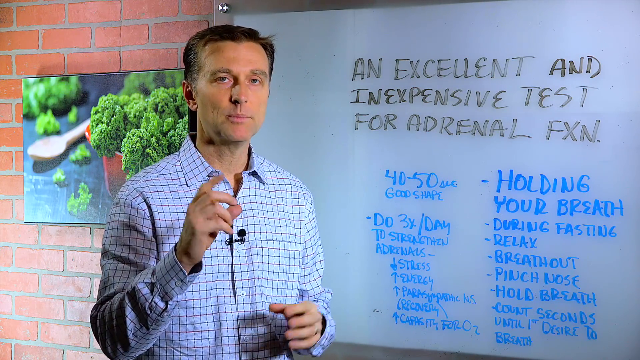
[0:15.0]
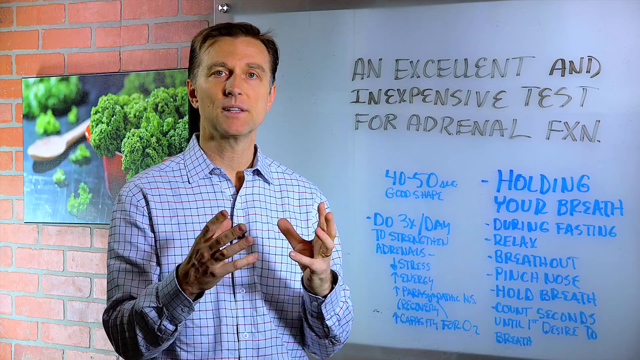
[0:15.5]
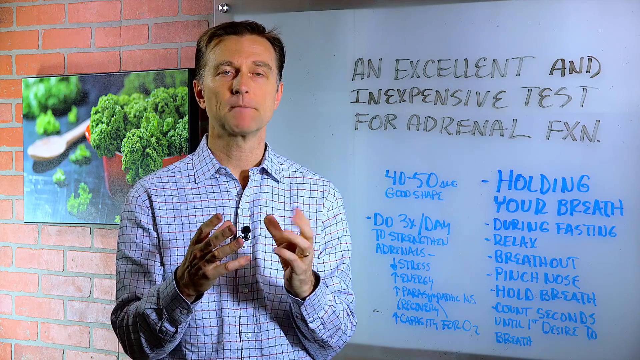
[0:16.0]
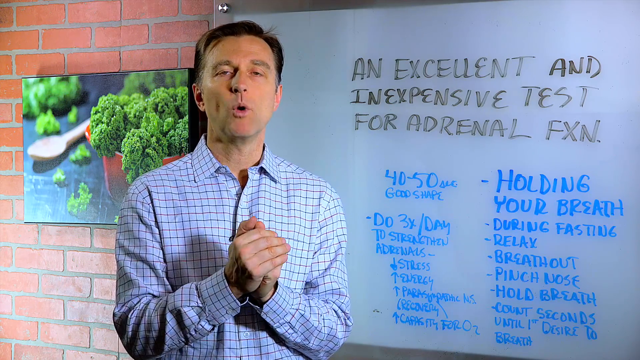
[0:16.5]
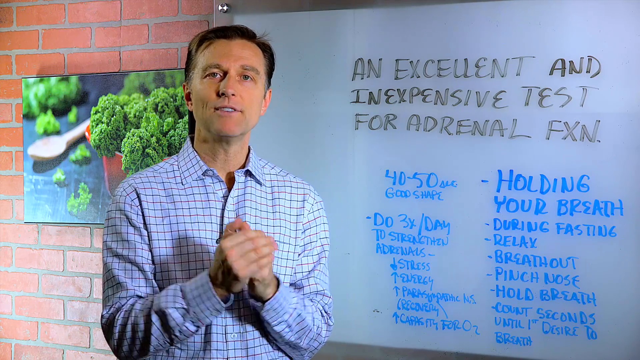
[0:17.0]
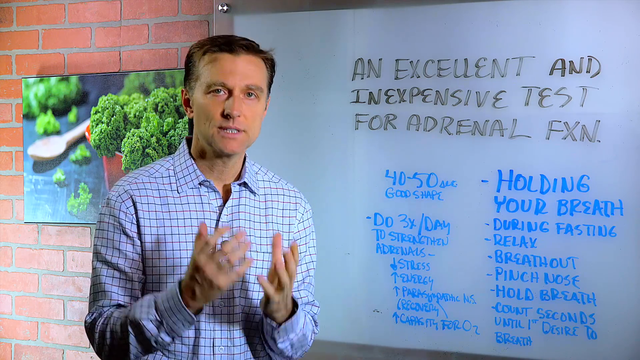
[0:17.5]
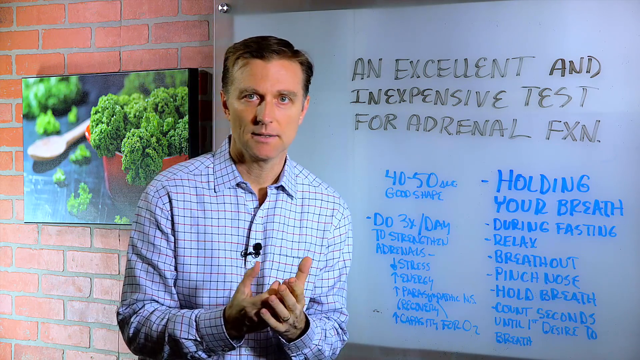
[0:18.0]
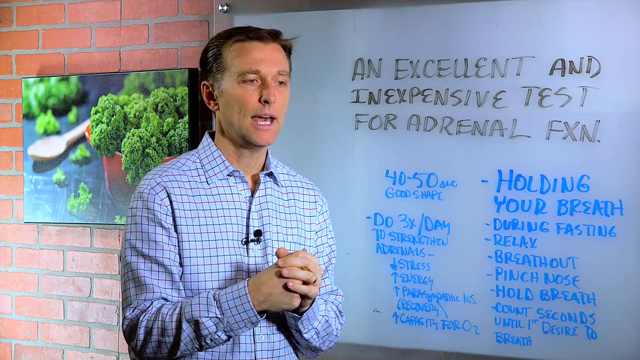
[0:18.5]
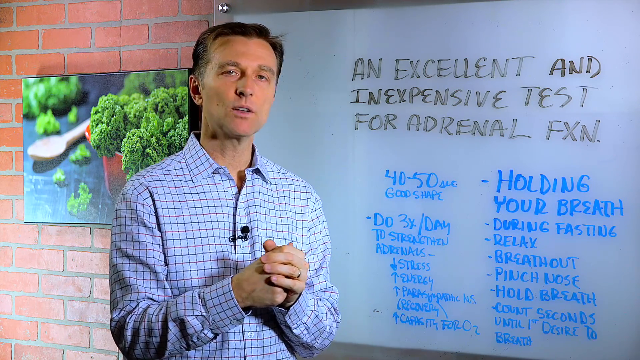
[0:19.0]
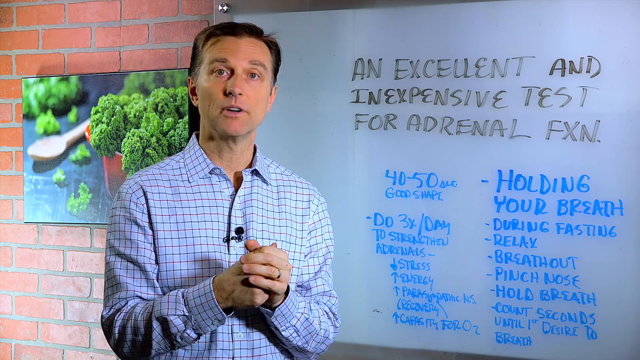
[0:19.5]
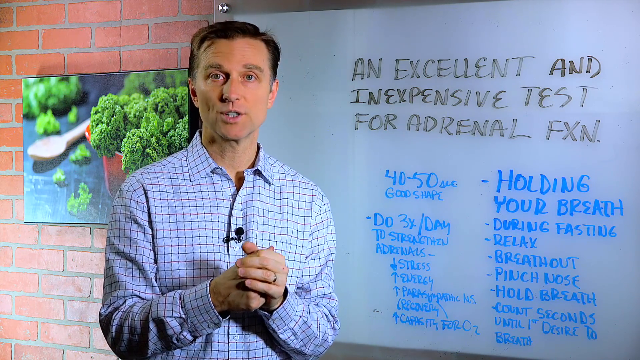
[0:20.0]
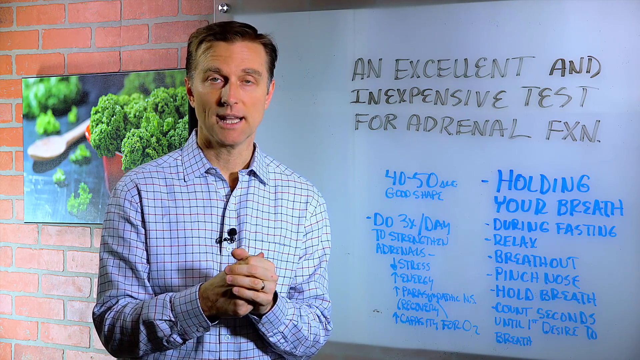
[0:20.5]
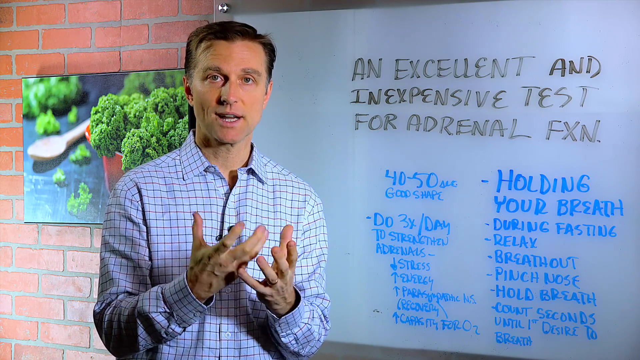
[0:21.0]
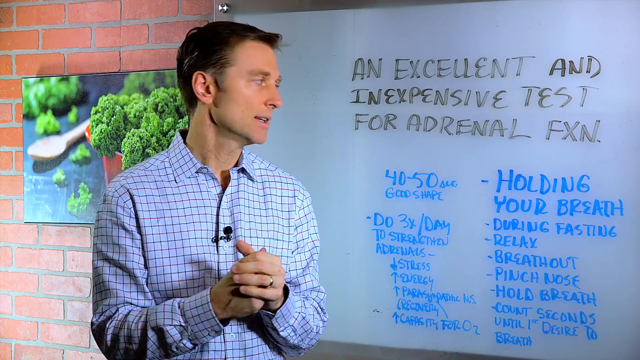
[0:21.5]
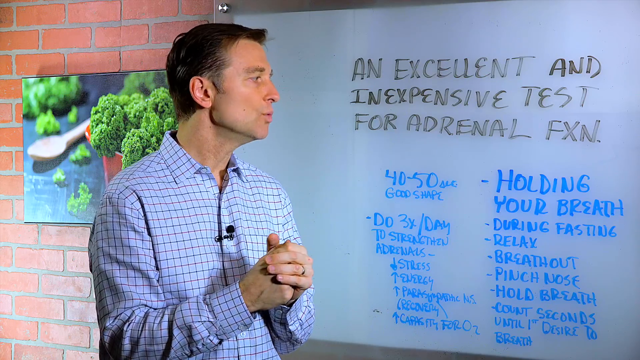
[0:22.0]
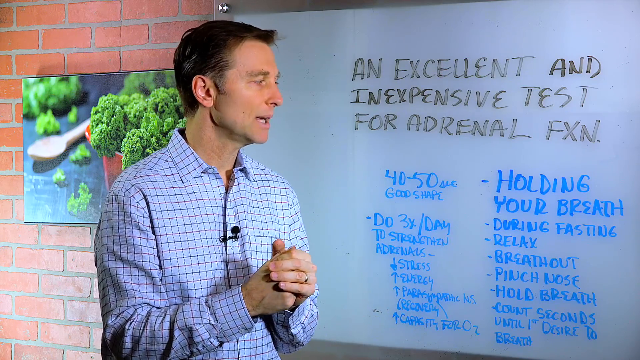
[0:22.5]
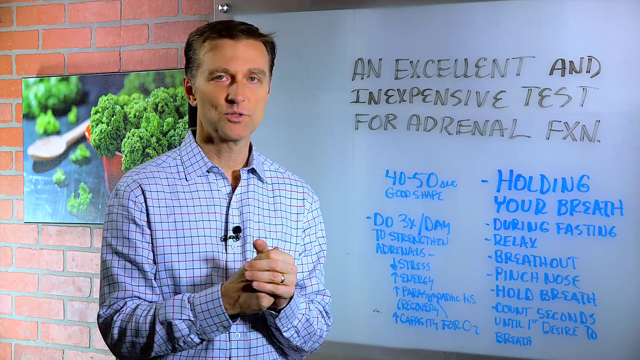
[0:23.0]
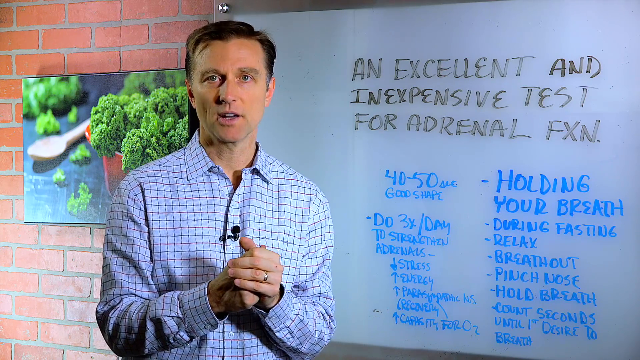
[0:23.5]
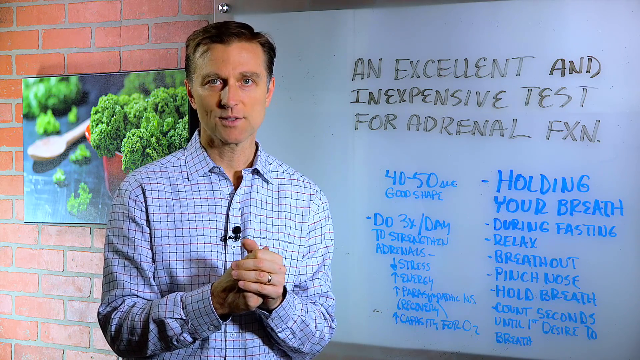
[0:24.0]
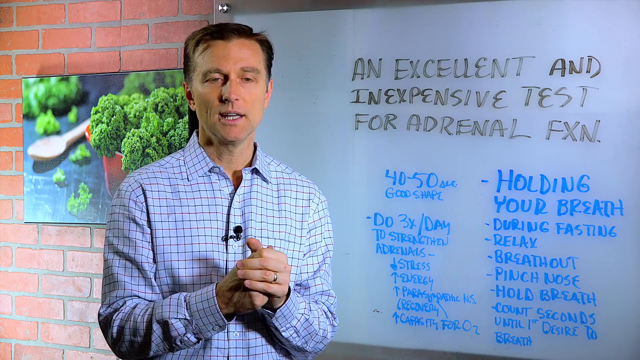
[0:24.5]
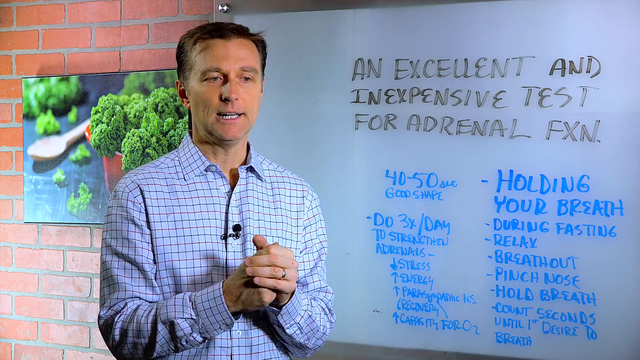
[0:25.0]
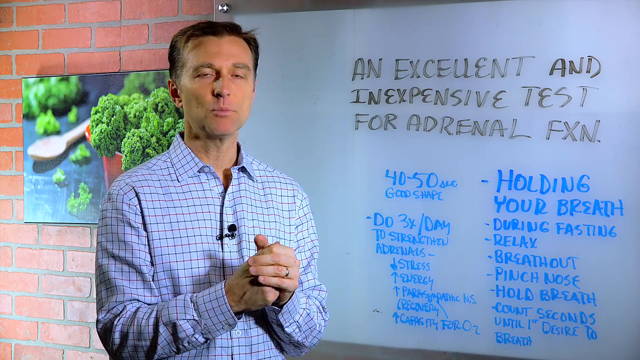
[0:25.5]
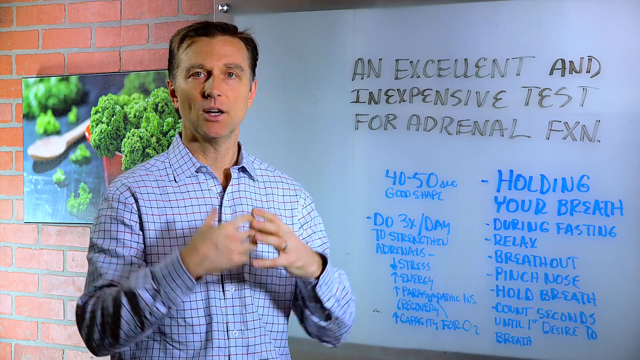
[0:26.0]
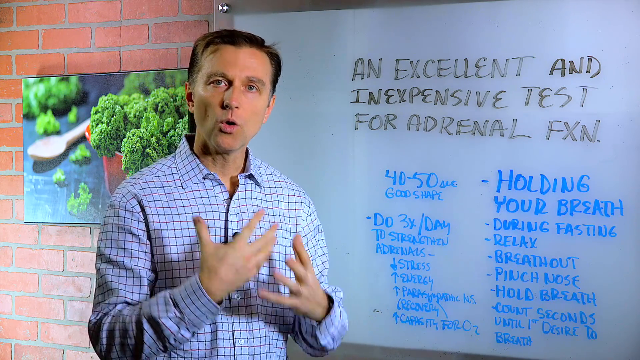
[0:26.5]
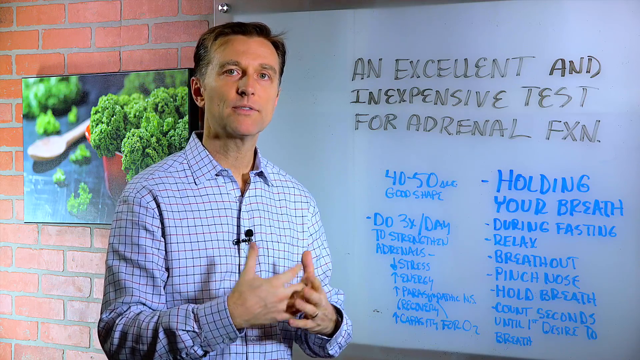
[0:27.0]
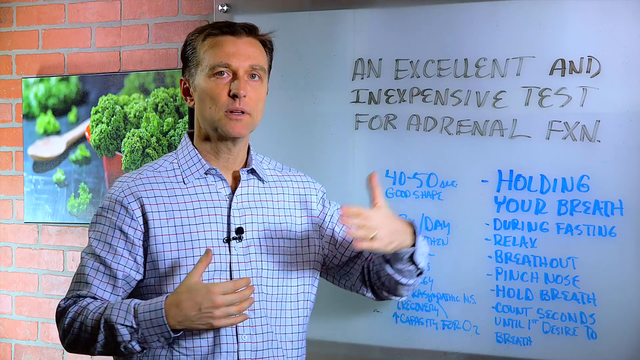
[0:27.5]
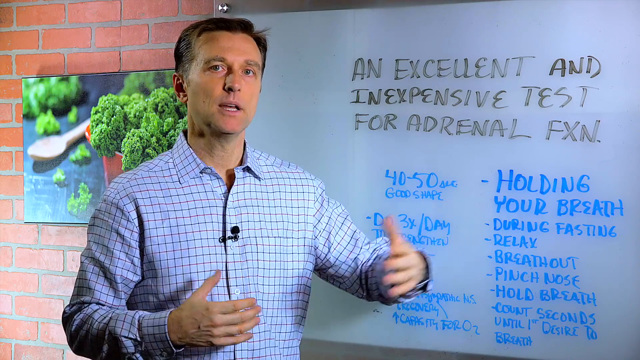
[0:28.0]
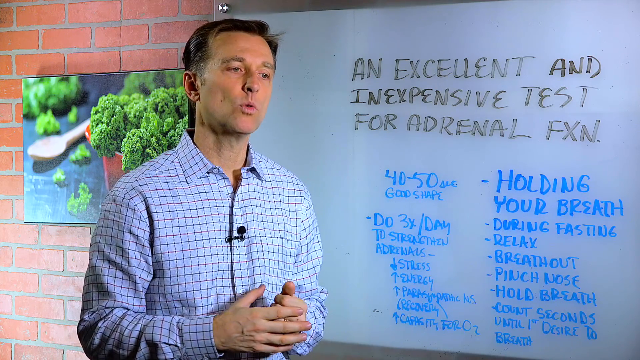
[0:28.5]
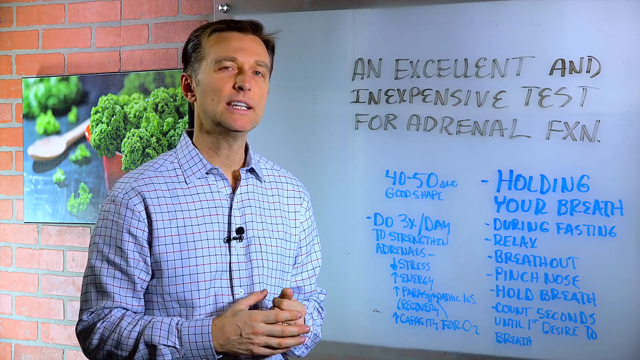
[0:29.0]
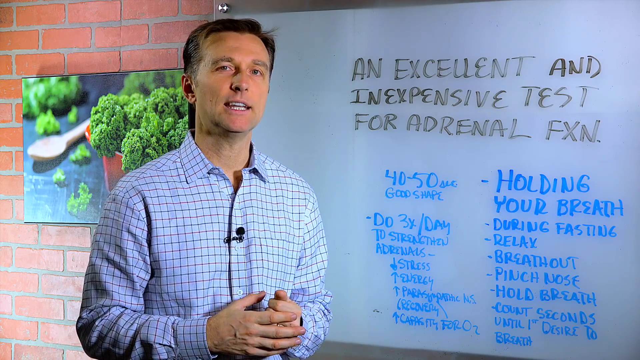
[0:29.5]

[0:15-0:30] The man in the blue checkered shirt keeps talking about what is written on the whiteboard. He has short, neatly cut dark hair with slight gray at the temples, and his eyebrows look slightly grayer, a lighter shade than the hair on his head. He is slim and gestures with his hands as he talks, clapping his two hands together. A wedding ring is visible on the ring finger of his left hand. The title of the video at the upper left says "a quick test for adrenal fatigue". Further information is written in blue toward the bottom of the whiteboard. The column on the left, written in blue, reads from the top "40 to 50" and "good shape", with more information on the lower part of the whiteboard.